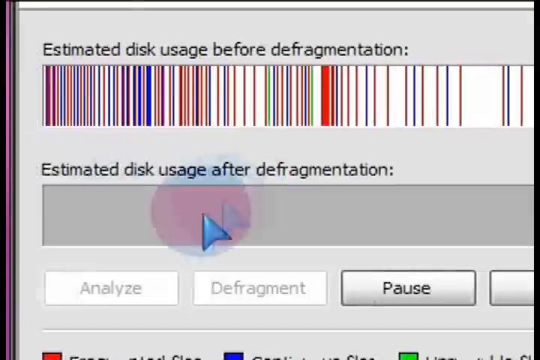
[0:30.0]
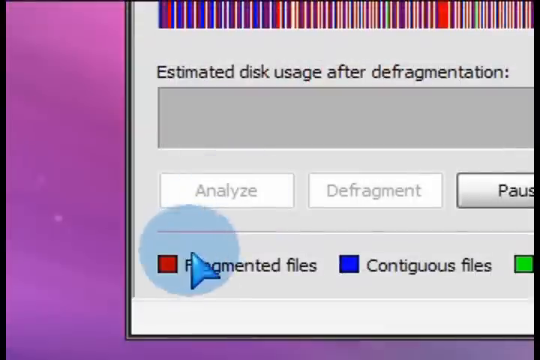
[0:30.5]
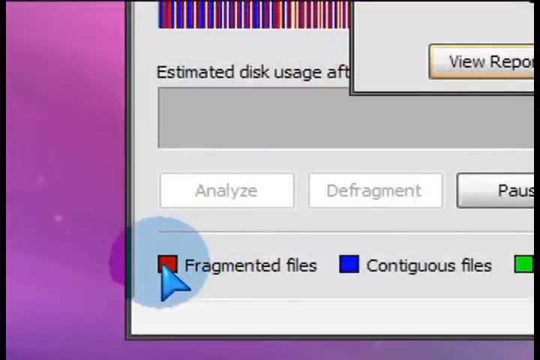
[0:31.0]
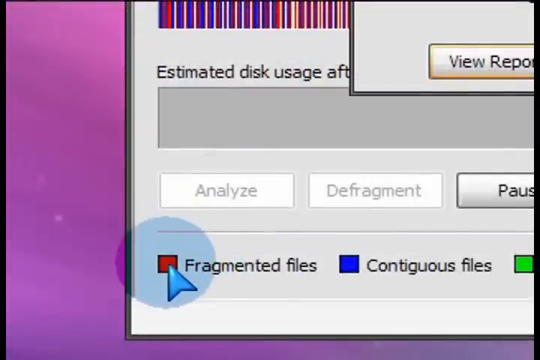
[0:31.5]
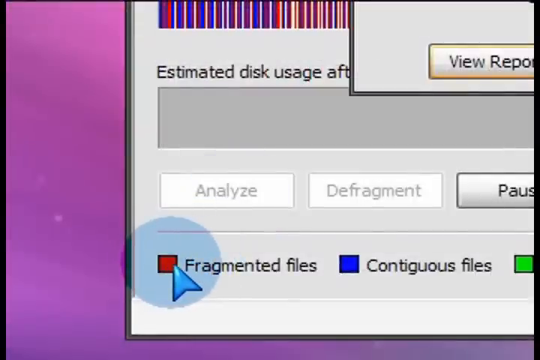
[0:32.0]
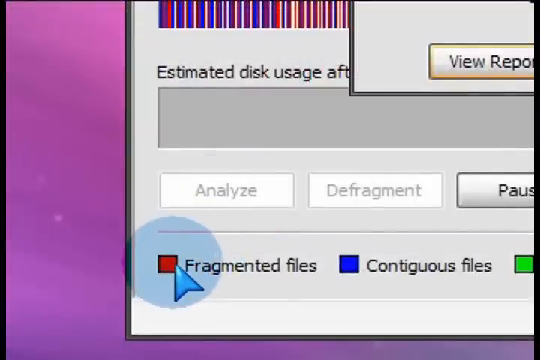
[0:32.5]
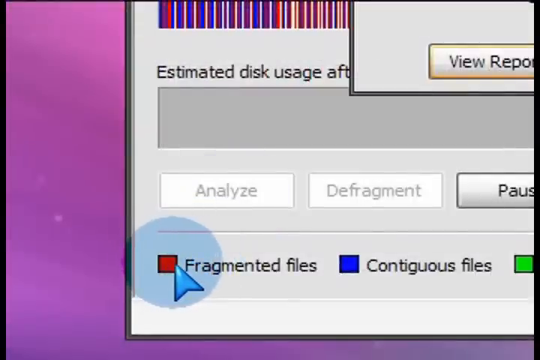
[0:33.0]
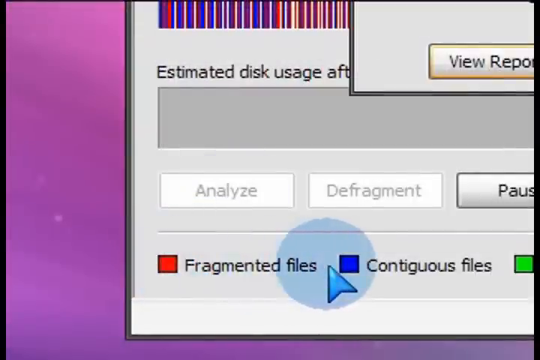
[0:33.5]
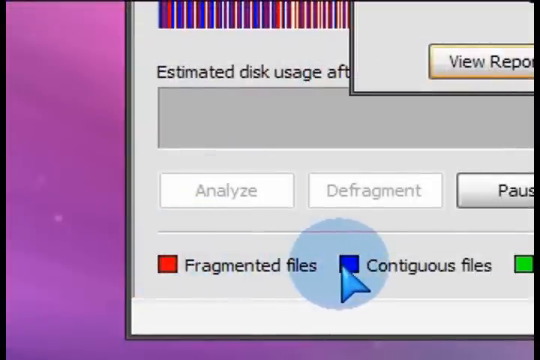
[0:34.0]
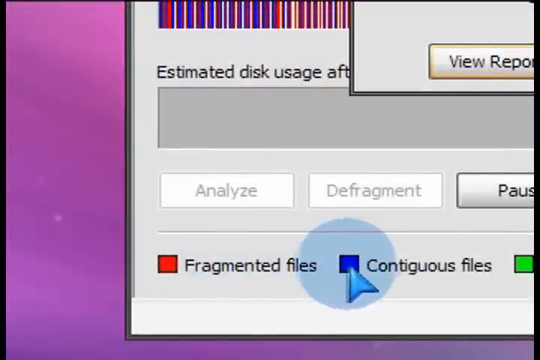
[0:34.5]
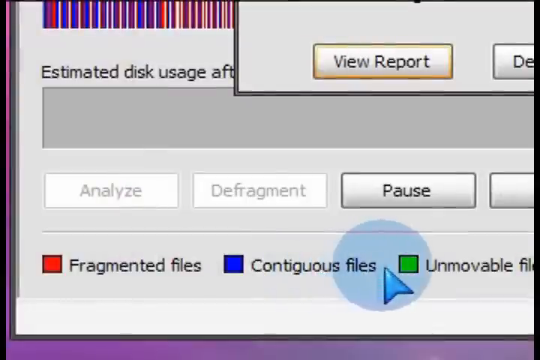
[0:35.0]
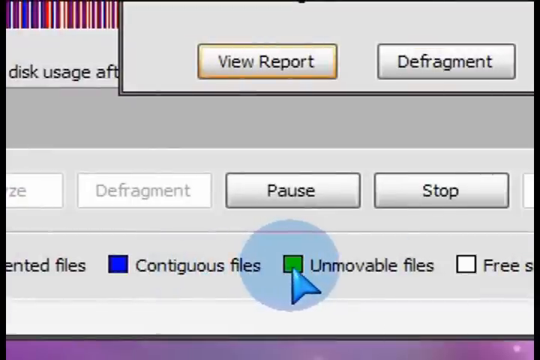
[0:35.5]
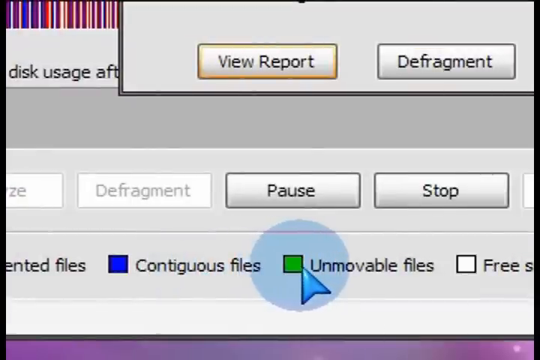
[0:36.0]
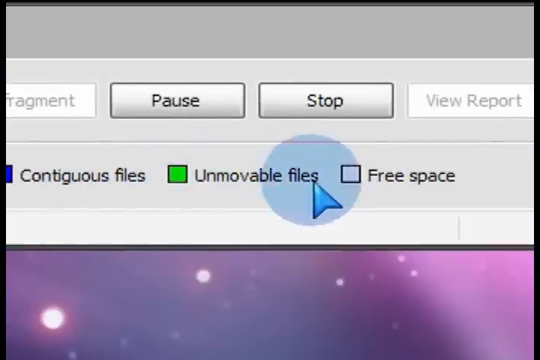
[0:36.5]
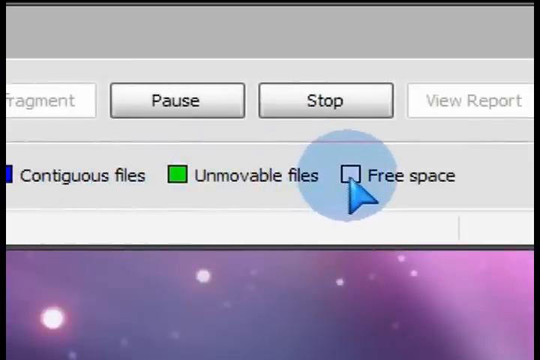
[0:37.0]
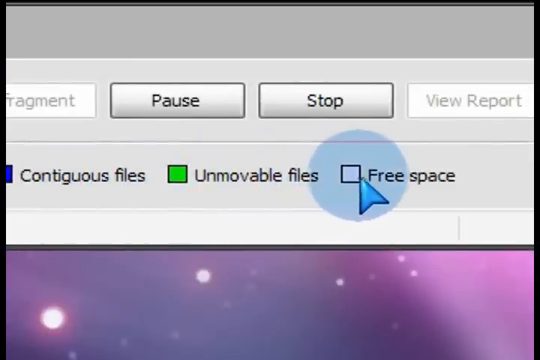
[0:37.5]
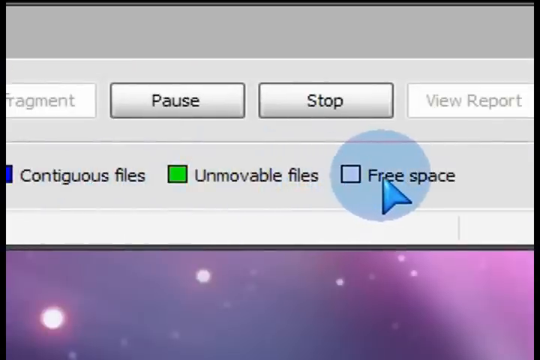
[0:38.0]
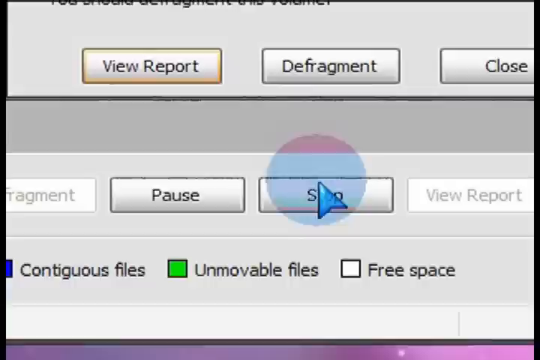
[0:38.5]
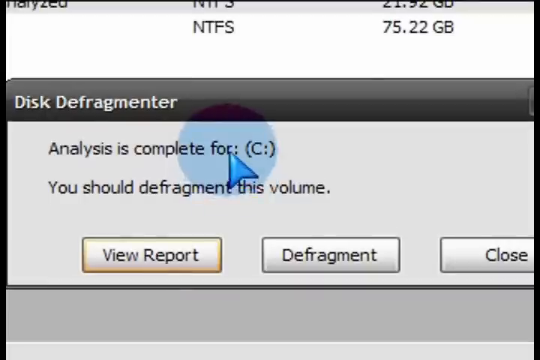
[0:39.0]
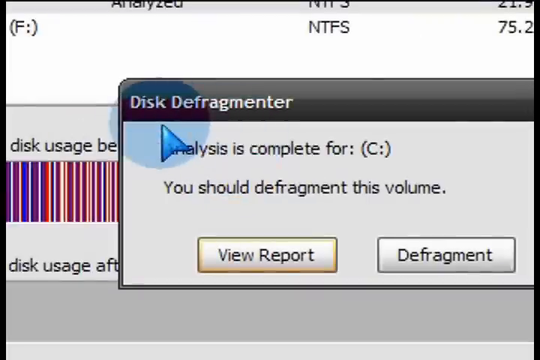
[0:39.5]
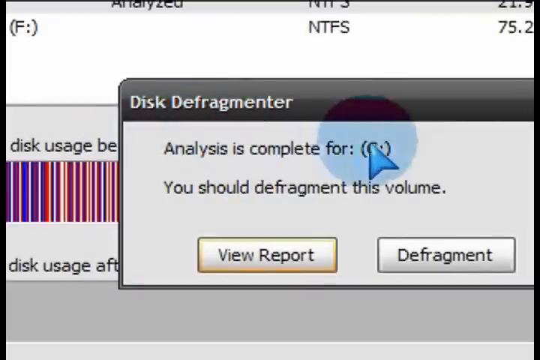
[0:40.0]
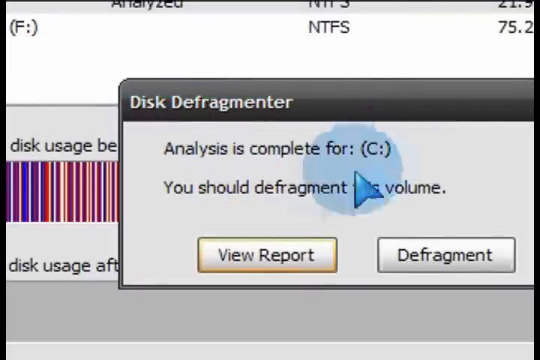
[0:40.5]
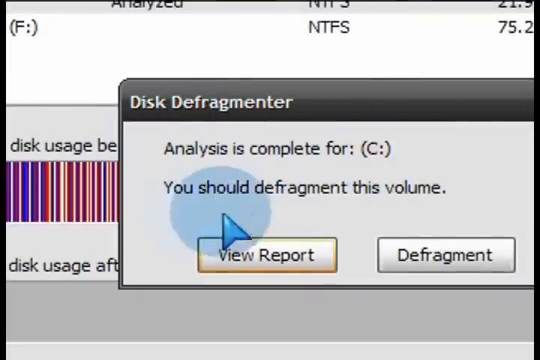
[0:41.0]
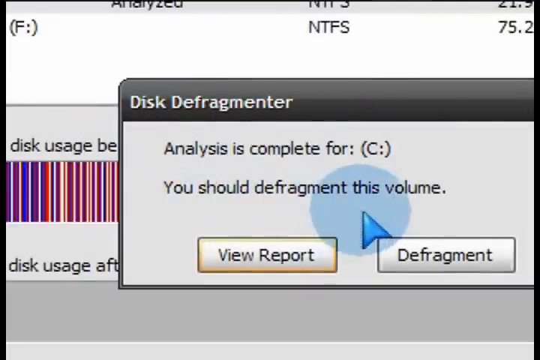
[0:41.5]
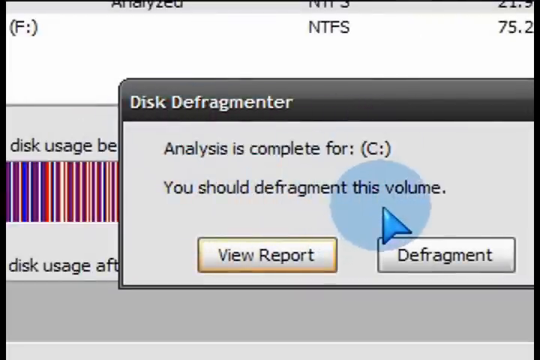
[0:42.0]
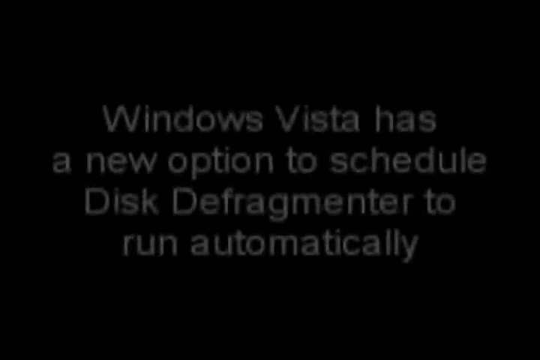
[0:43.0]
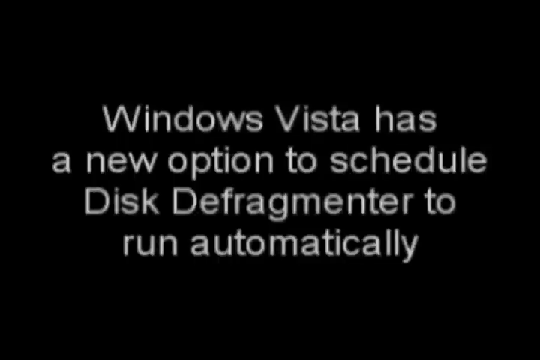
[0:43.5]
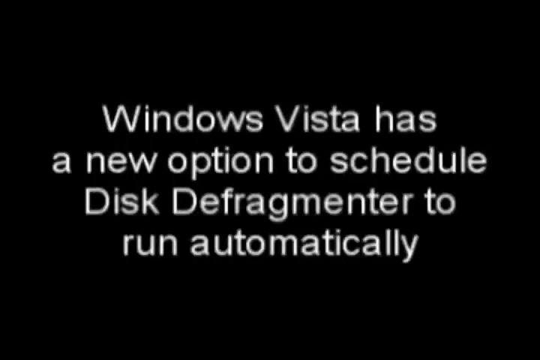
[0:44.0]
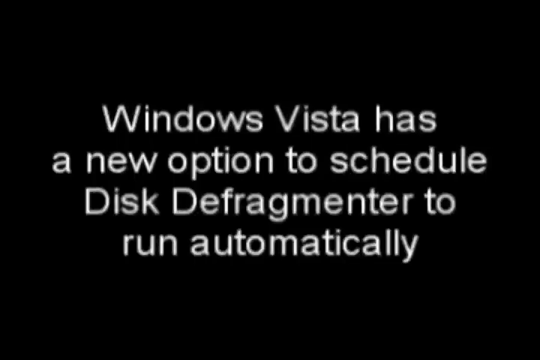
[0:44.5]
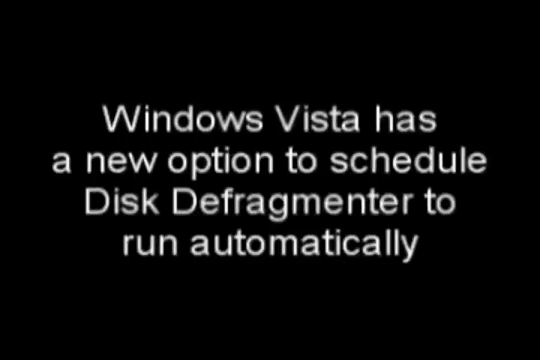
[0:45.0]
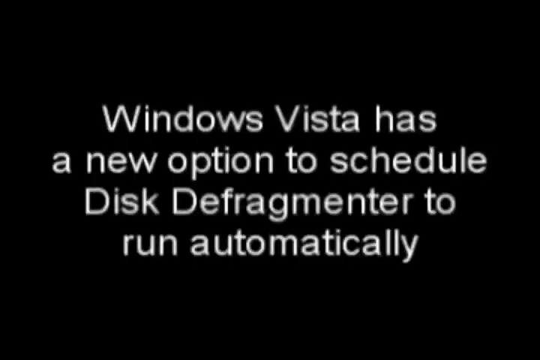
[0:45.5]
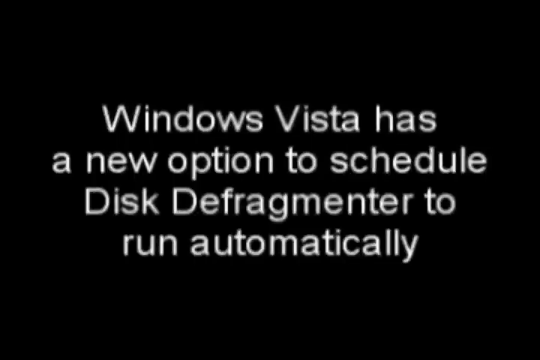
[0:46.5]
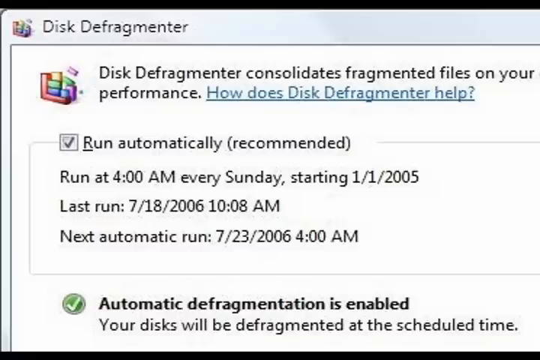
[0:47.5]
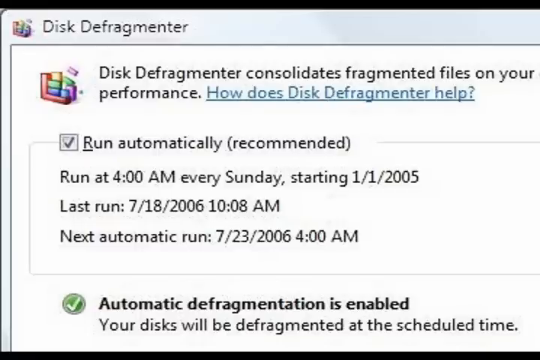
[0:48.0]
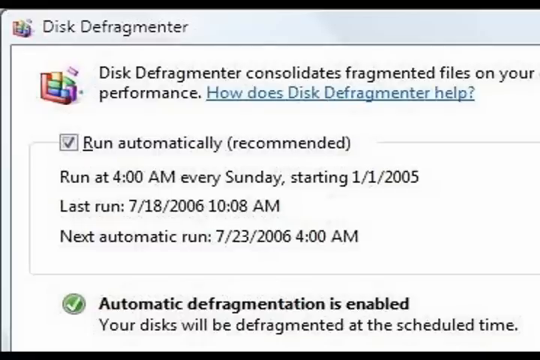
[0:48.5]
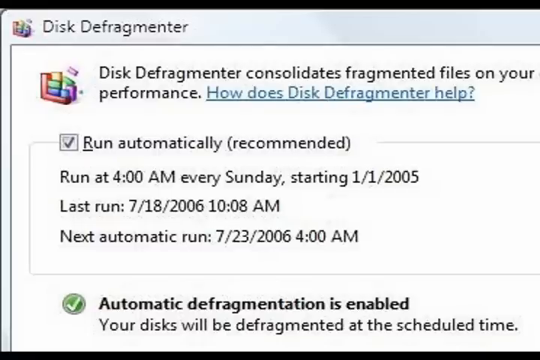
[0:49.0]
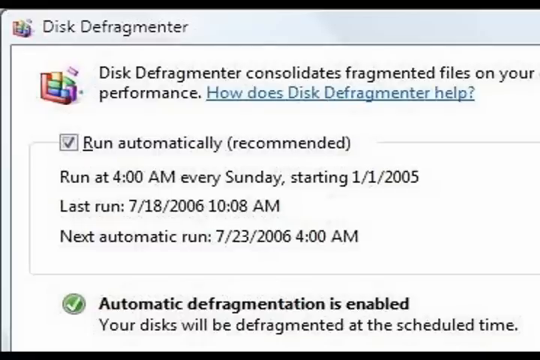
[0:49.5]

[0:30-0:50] The user apparently continues through the defragmentation process, showing the legend for fragmented files, contiguous files, unmovable files and free space. A small window appears reading "Disk Defragmenter analysis is completed for C. You should defragment this volume," with two buttons, View Report and Defragment. A page reads "Windows Vista has a new option to schedule Disk Defragmenter to run automatically." The Disk Defragmenter window then shows text beginning "Disk Defragmenter consolidates fragmented files" and a line asking how Disk Defragmenter helps. It shows "Run automatically (recommended)," a schedule to run at 4 a.m. every Sunday starting 1st January 2005, a last run on 18th July 2006 at 10:08 a.m., and a next automatic run on 23rd July 2006 at 4 a.m. Text beginning "when automatic defragmentation is enabled, your disk would" is also visible.